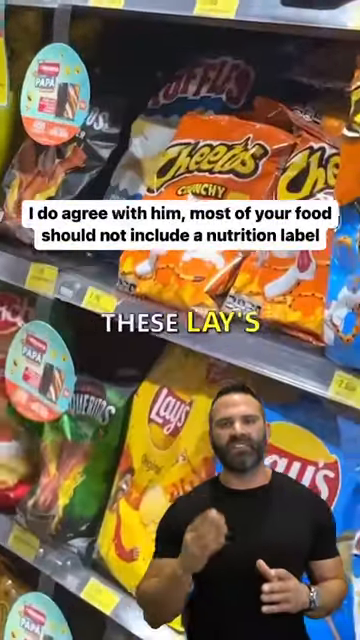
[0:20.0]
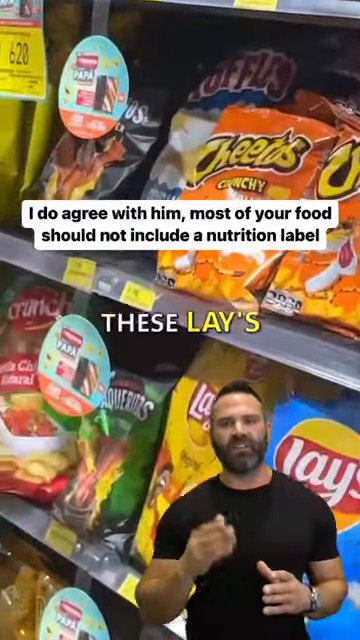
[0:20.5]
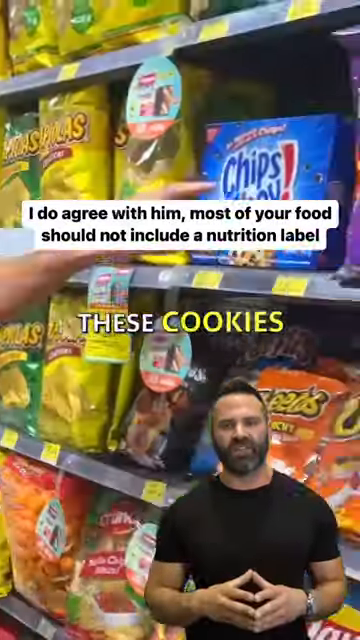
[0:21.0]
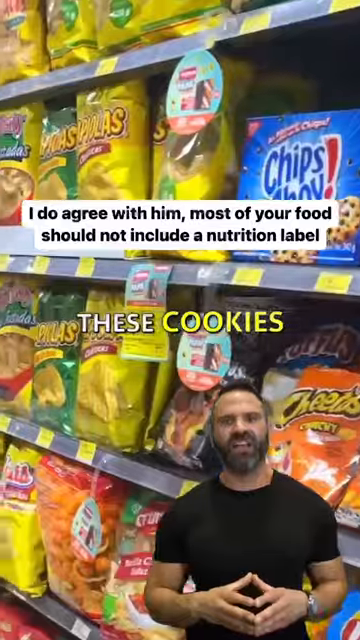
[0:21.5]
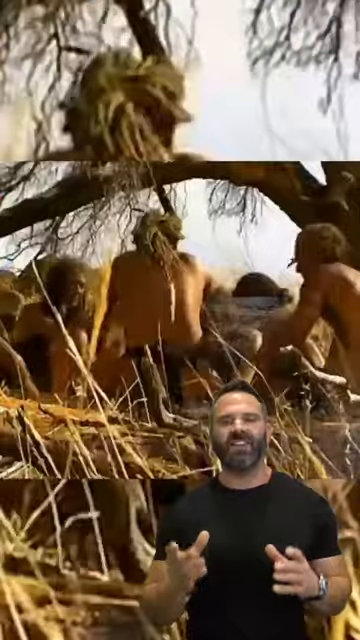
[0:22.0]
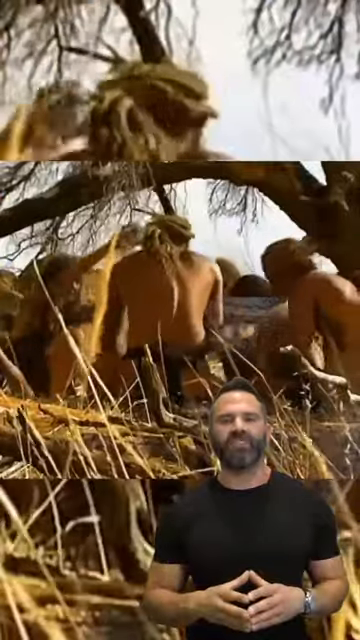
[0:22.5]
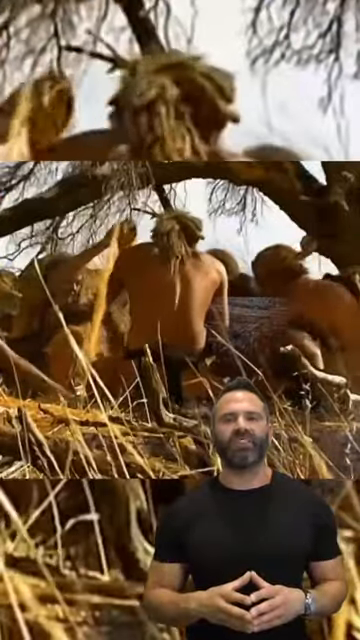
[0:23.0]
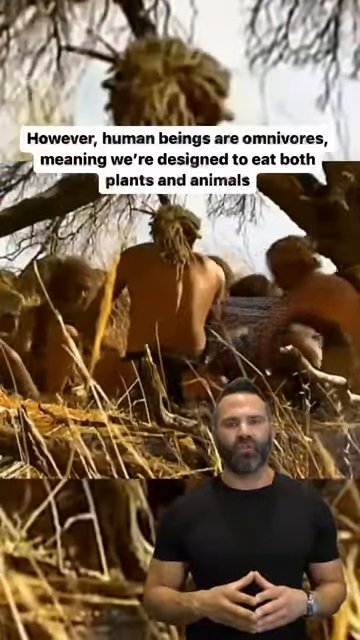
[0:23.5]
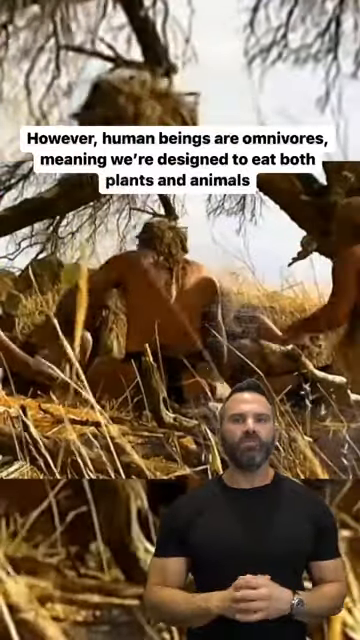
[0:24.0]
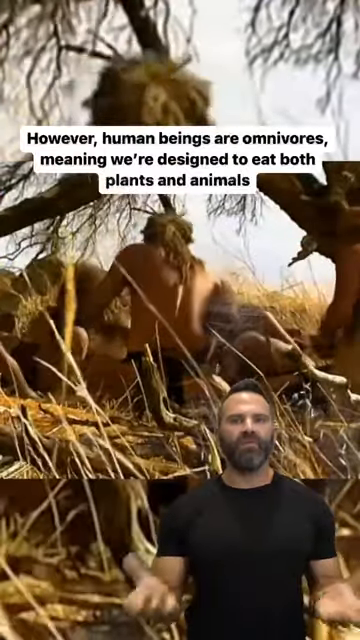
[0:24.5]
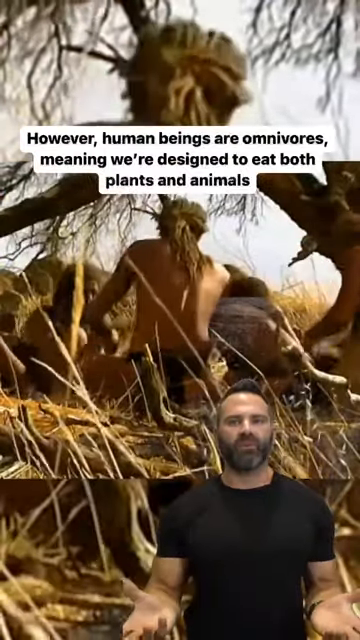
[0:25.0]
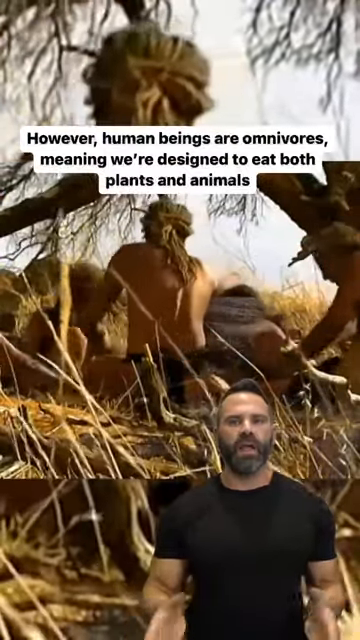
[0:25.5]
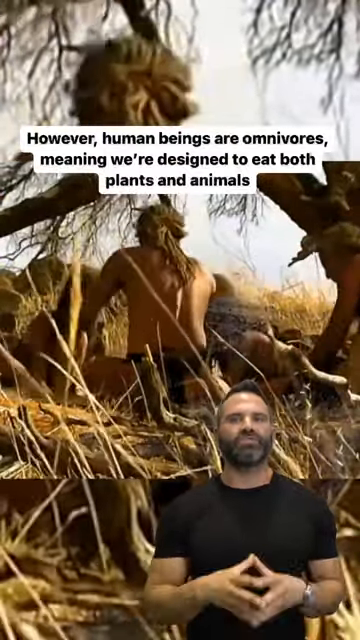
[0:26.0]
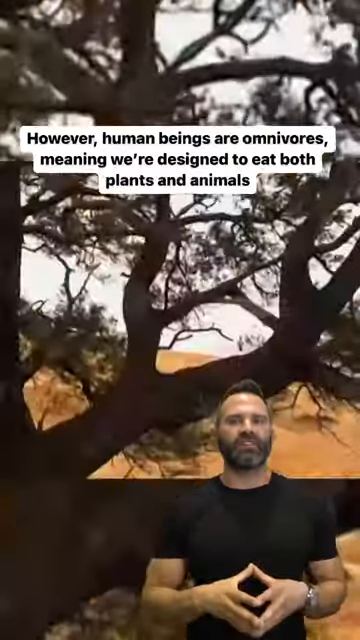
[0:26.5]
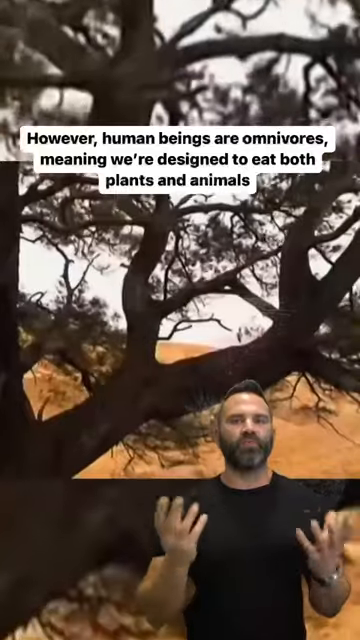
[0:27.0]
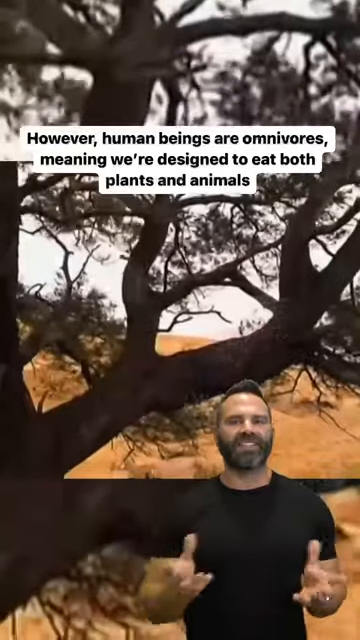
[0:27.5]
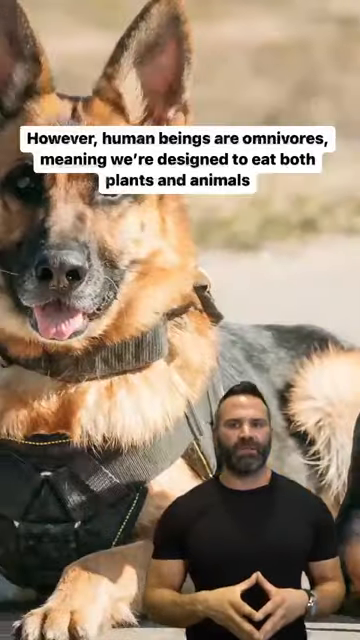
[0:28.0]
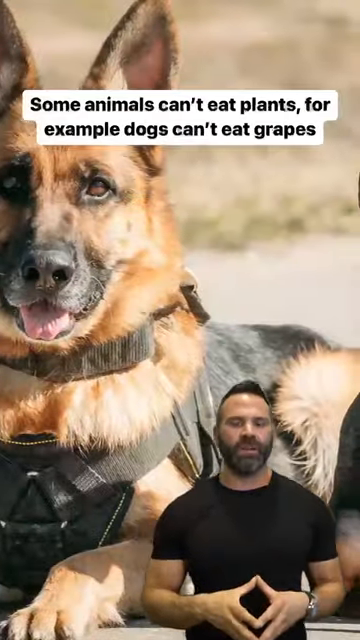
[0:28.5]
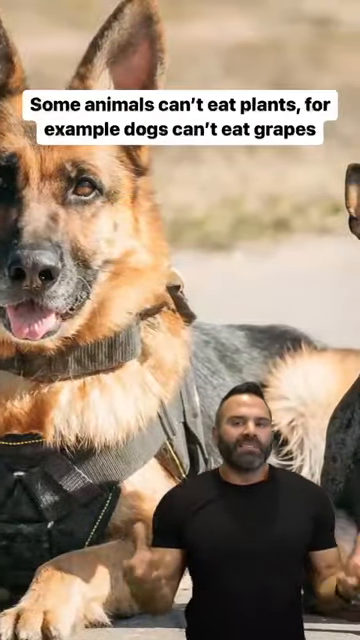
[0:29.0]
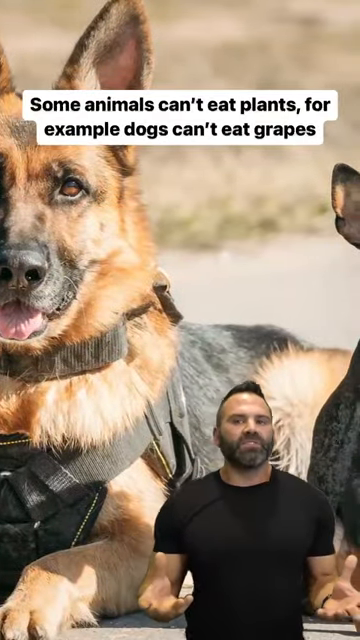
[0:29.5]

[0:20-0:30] A close-up shows chips on a grocery shelf. Footage resembling a movie then shows hunter-gatherers harvesting food. The text changes to "some animals can't eat plants for example dogs can't eat grapes," and a photo still of a German Shepherd dog appears.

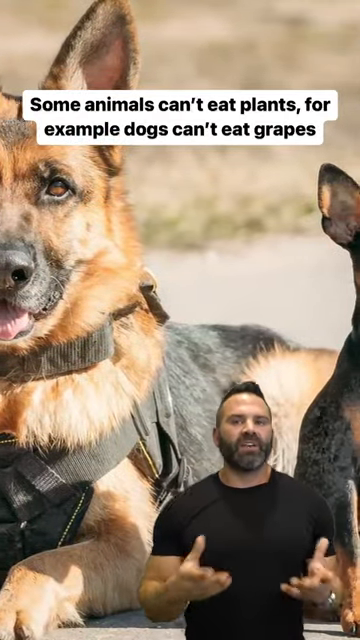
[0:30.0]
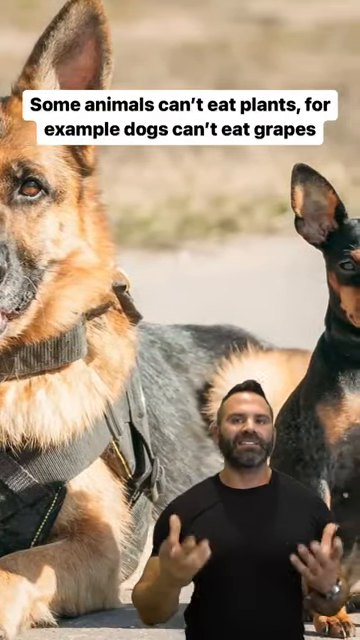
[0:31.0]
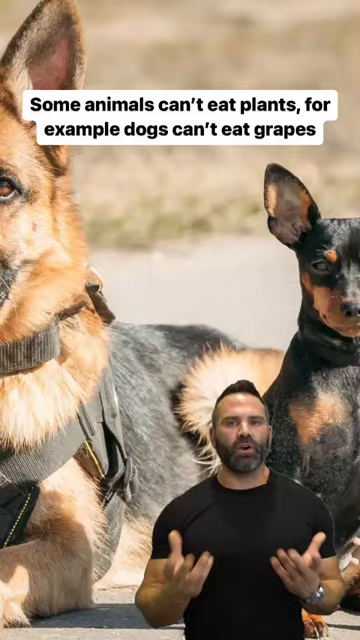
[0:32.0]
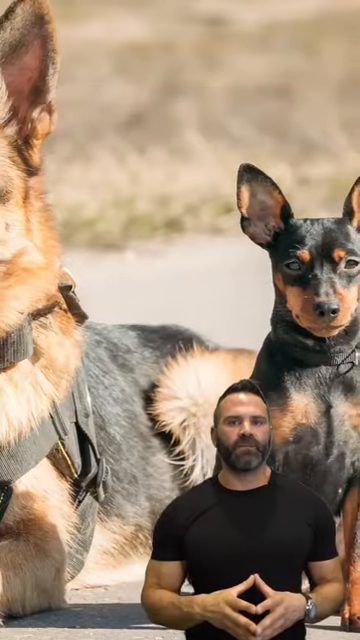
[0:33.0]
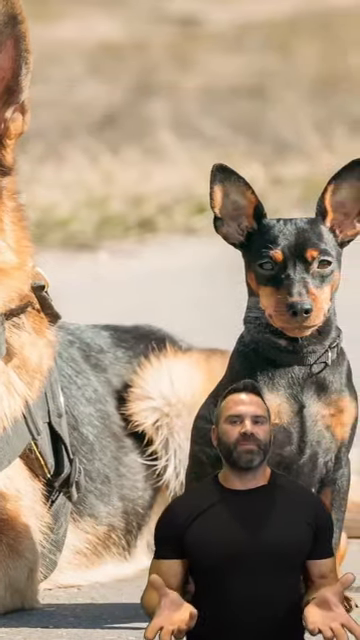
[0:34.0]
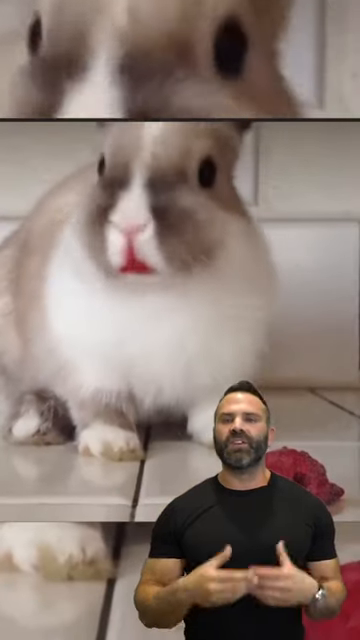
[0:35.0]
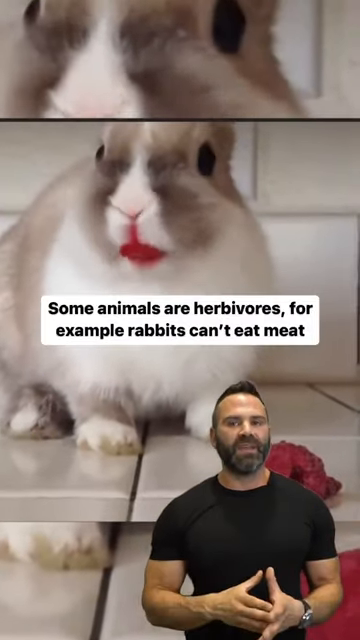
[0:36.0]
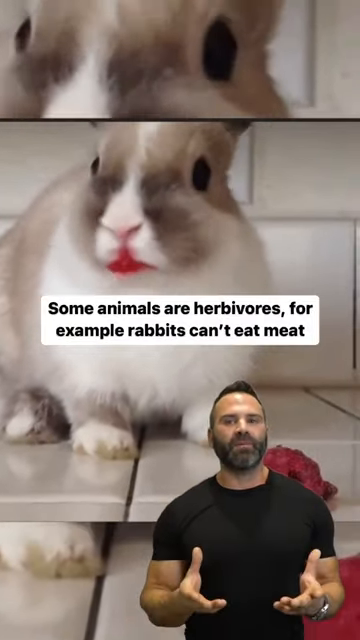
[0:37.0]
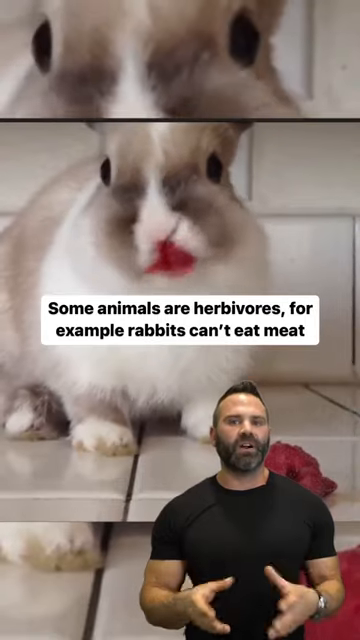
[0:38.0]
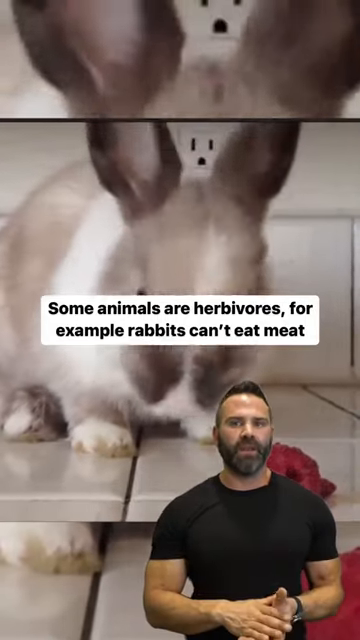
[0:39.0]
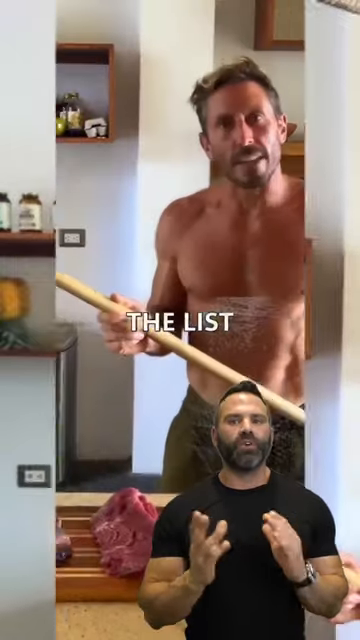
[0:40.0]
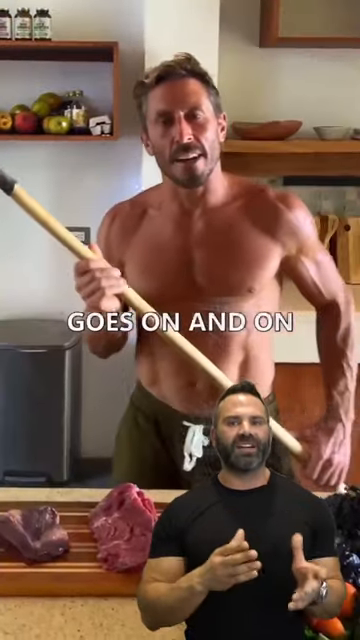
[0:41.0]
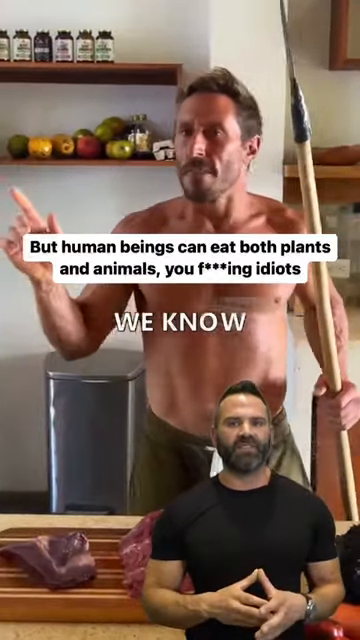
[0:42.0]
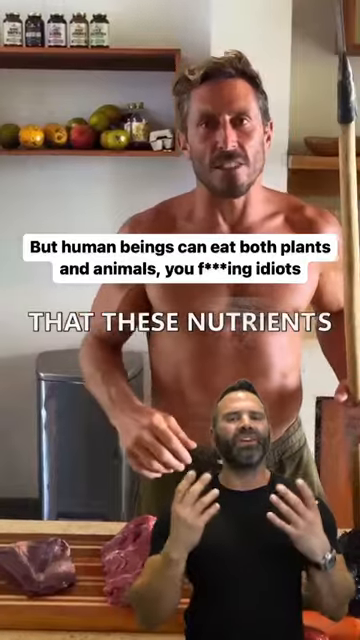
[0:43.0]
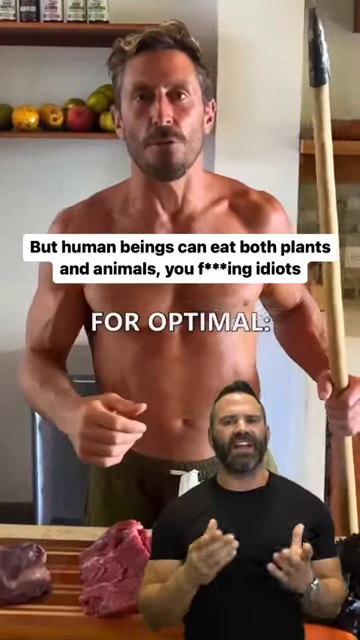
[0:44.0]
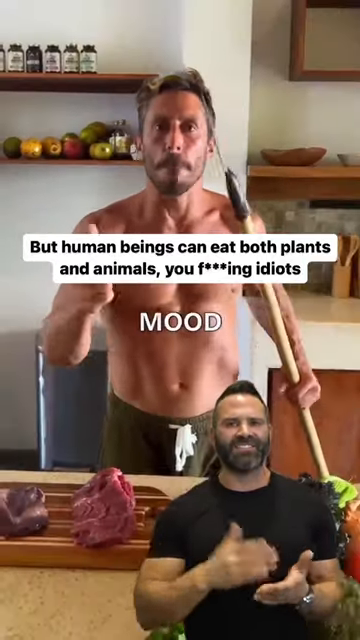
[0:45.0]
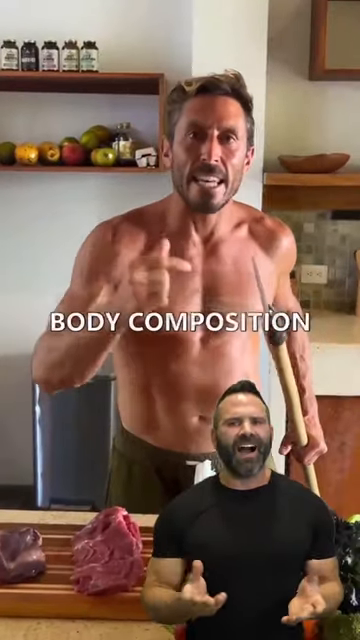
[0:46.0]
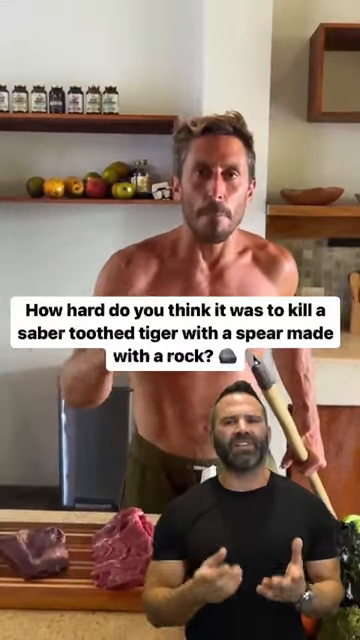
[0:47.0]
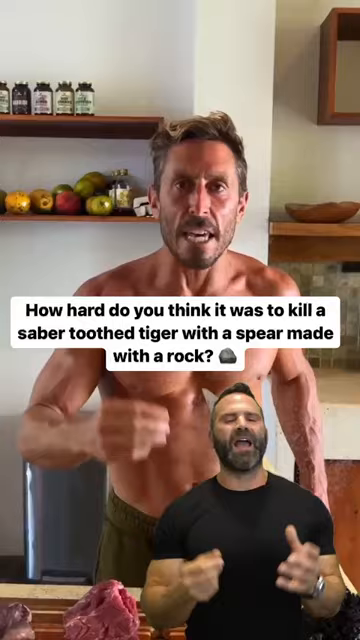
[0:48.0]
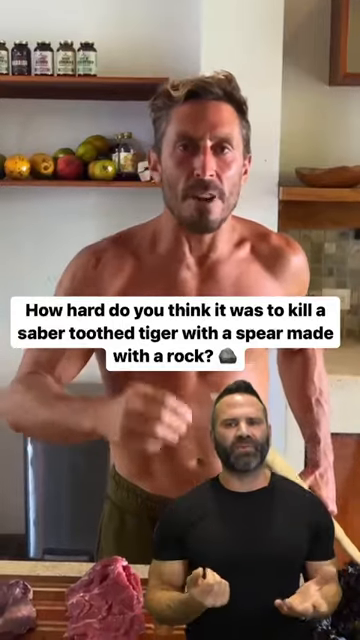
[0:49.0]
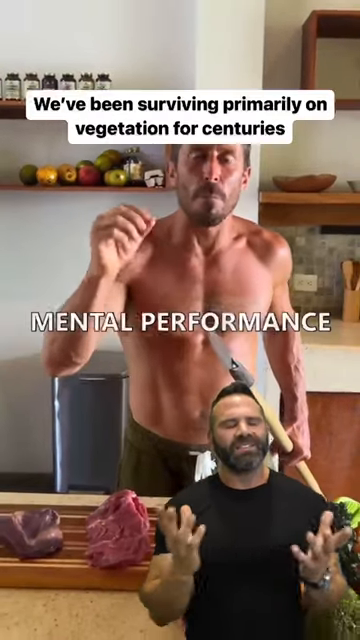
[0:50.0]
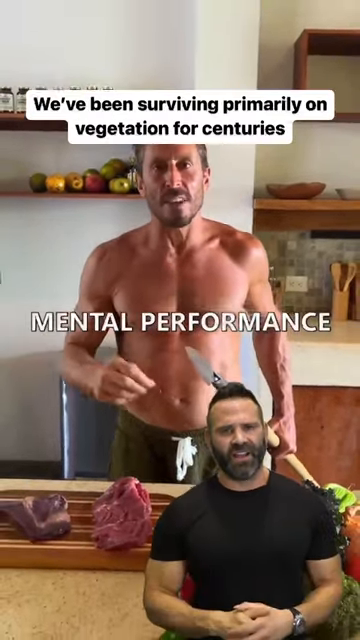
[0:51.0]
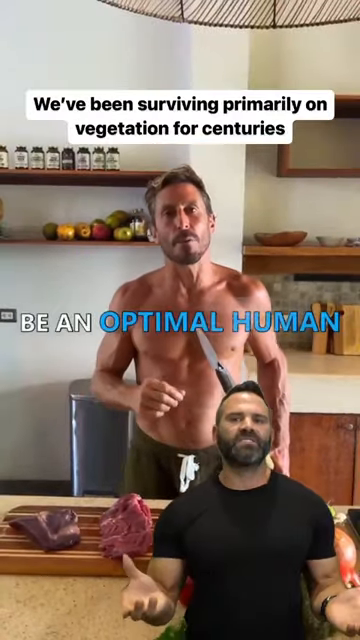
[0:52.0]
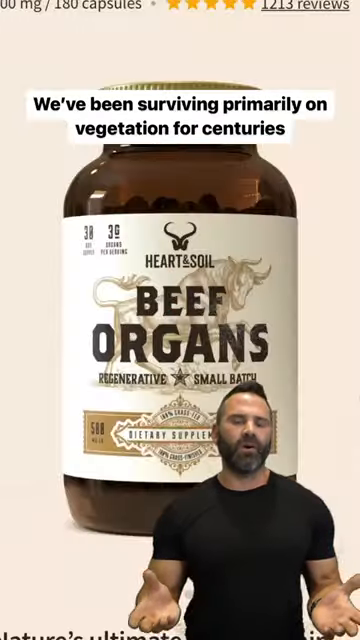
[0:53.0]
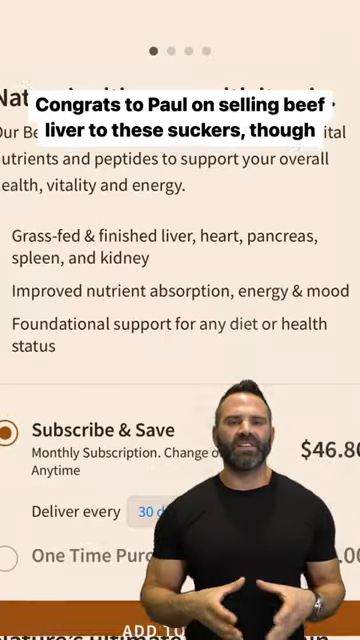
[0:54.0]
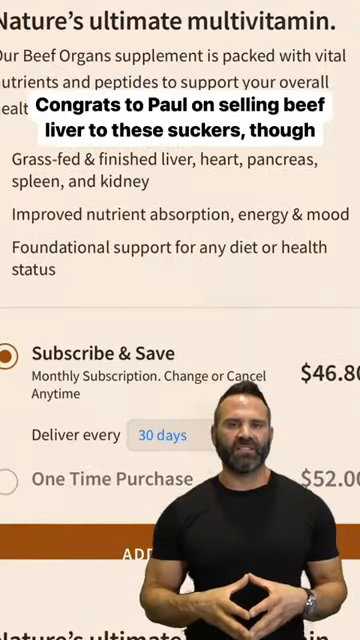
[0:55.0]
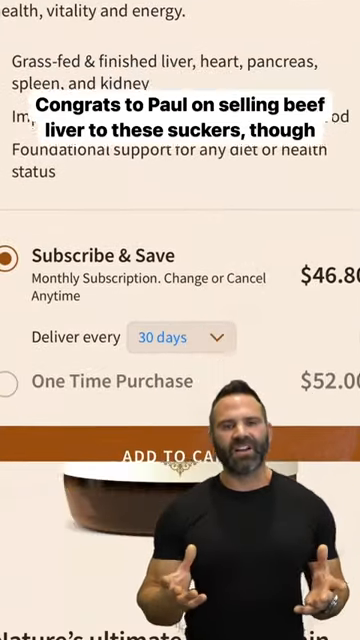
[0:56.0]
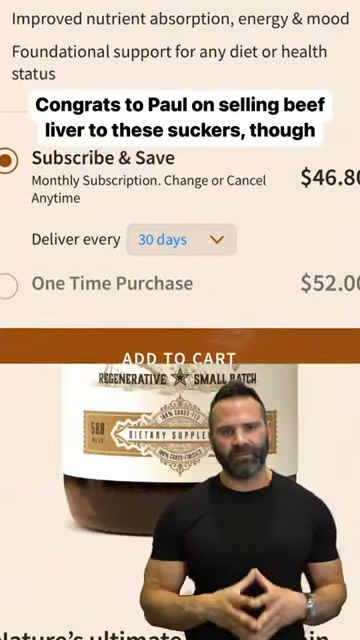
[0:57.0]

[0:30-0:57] A rabbit is shown chewing something in the background footage. The scene then changes to a meat-eater spokesperson, and text says "but human beings can eat both plants and animals." The video appears to be a rebuttal of meat-only diets, presented in a short social media reel format.